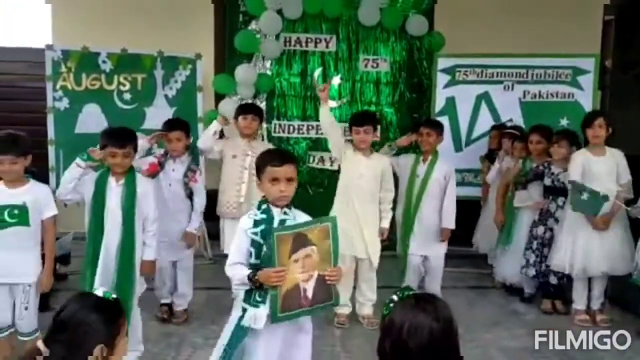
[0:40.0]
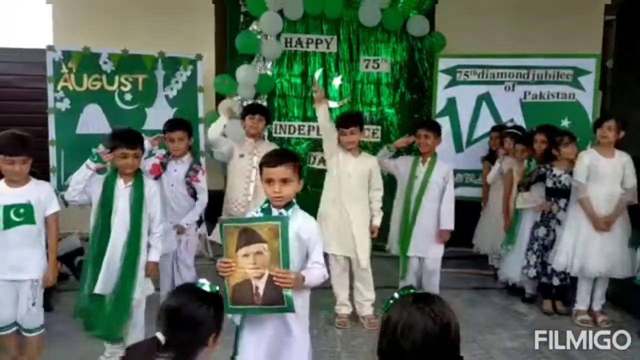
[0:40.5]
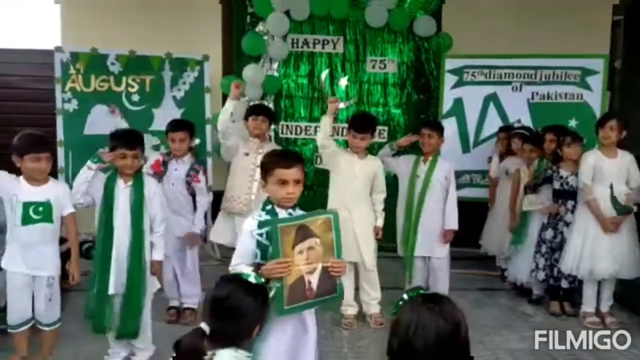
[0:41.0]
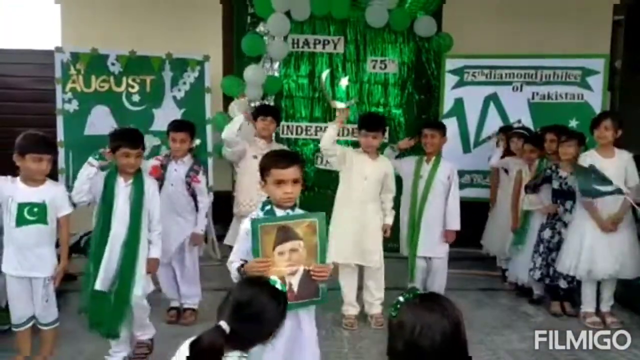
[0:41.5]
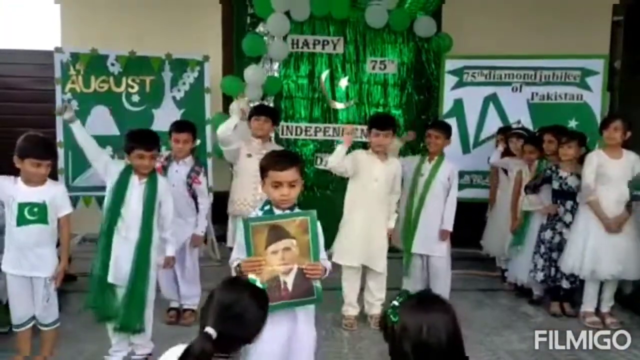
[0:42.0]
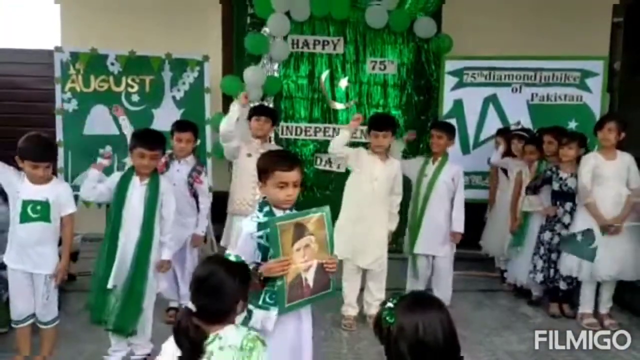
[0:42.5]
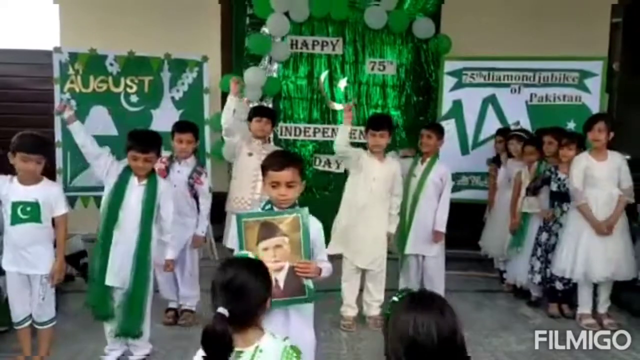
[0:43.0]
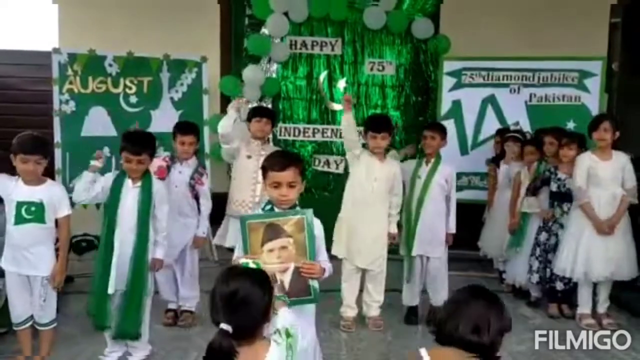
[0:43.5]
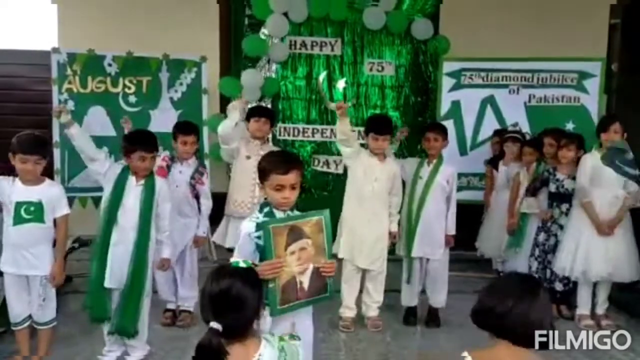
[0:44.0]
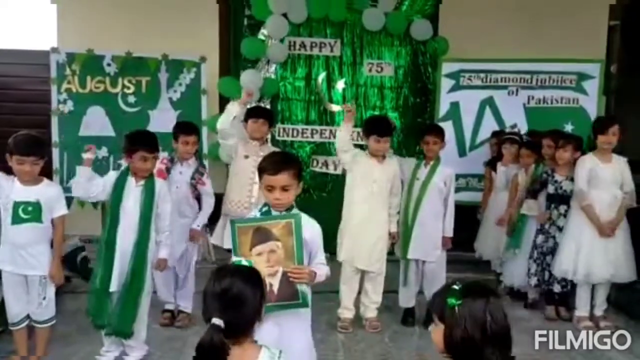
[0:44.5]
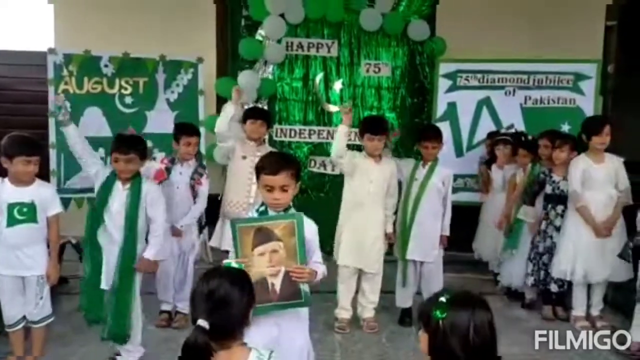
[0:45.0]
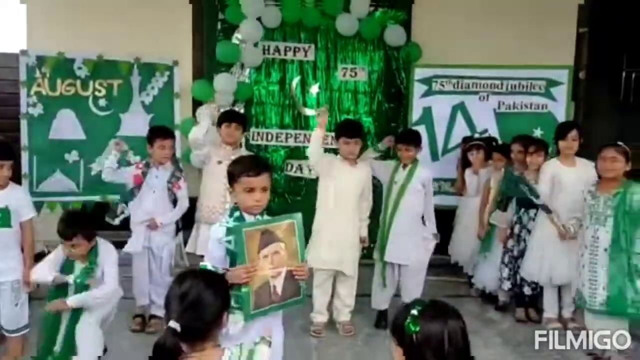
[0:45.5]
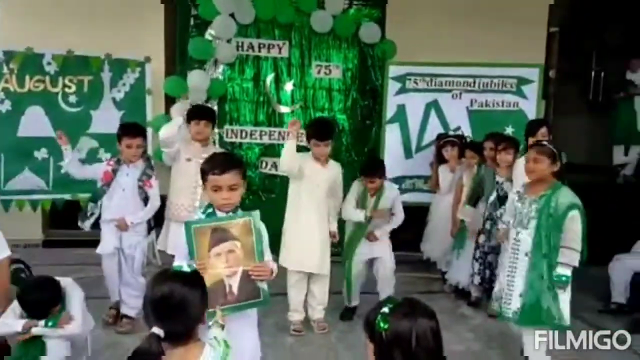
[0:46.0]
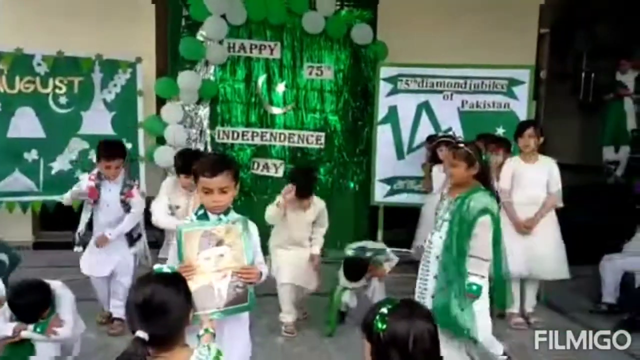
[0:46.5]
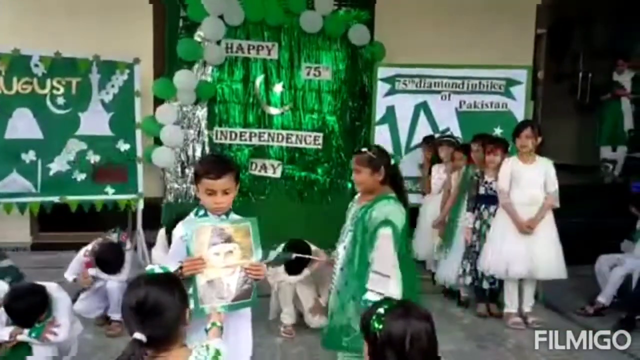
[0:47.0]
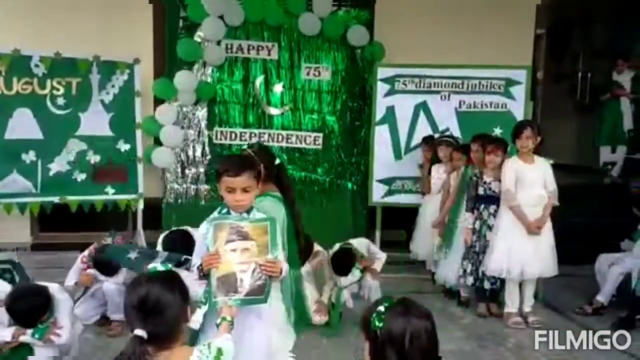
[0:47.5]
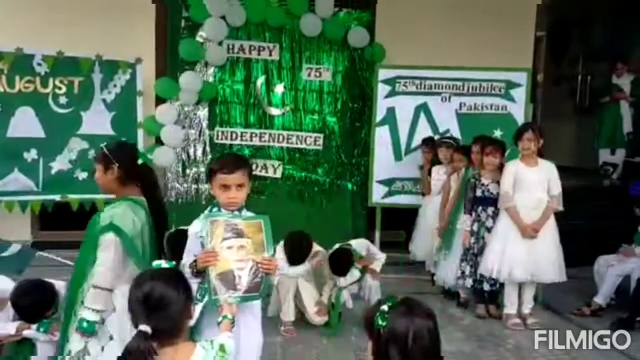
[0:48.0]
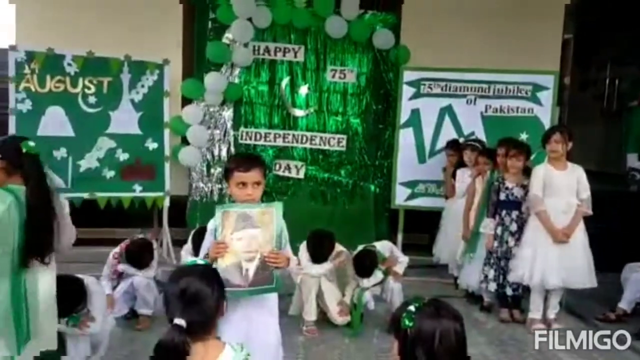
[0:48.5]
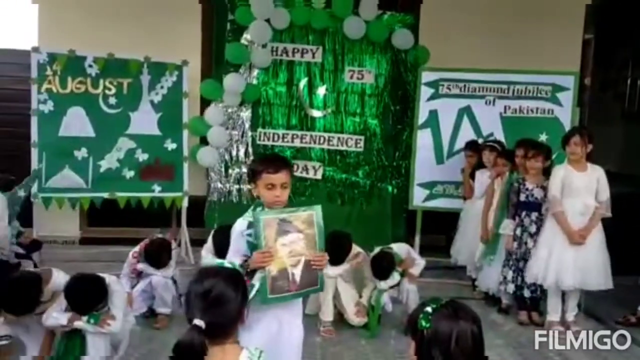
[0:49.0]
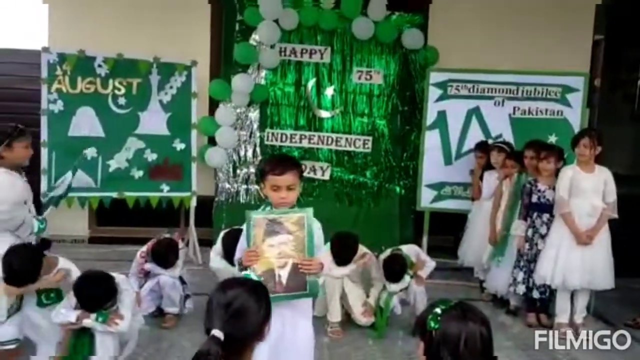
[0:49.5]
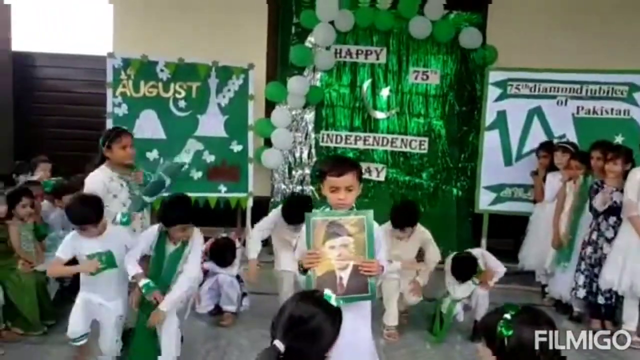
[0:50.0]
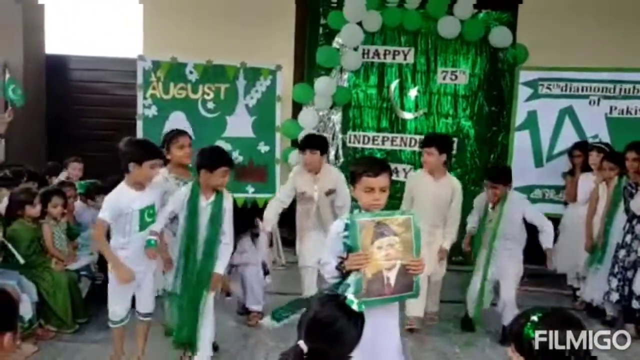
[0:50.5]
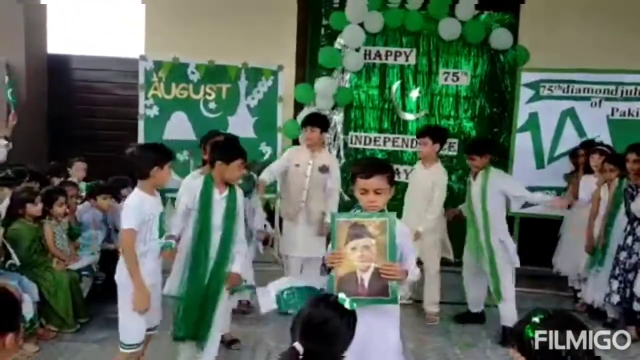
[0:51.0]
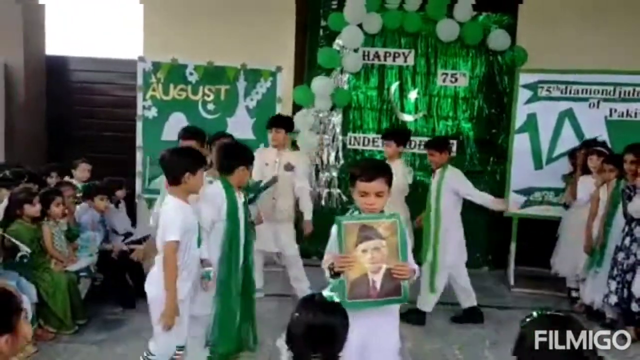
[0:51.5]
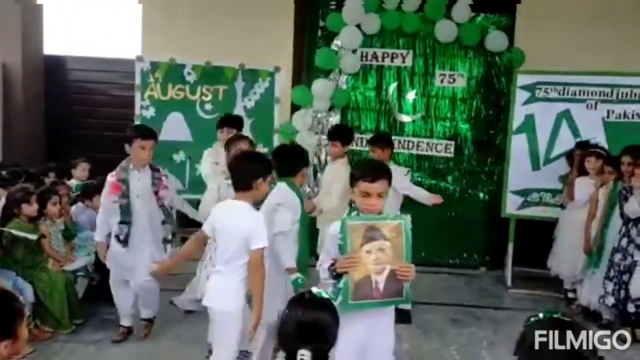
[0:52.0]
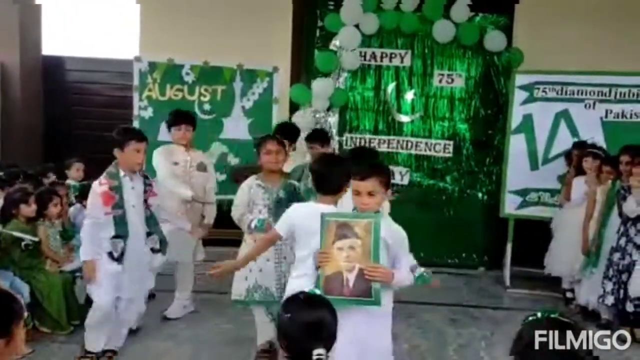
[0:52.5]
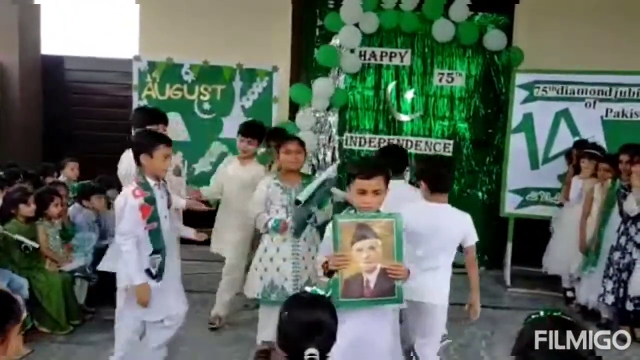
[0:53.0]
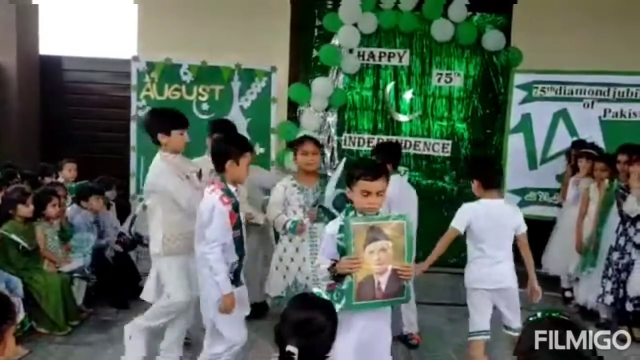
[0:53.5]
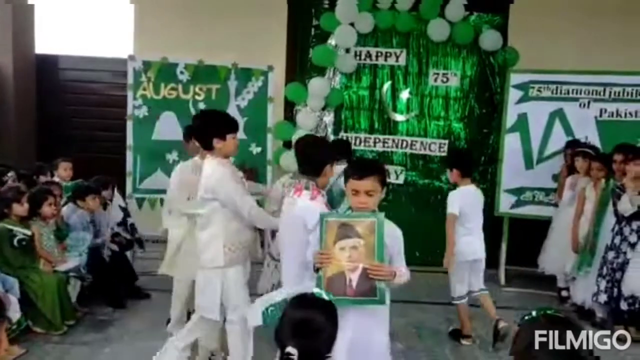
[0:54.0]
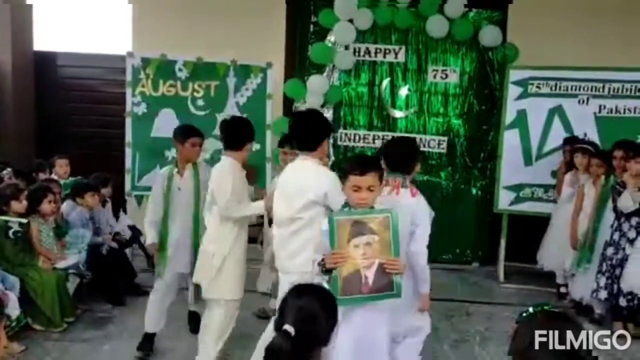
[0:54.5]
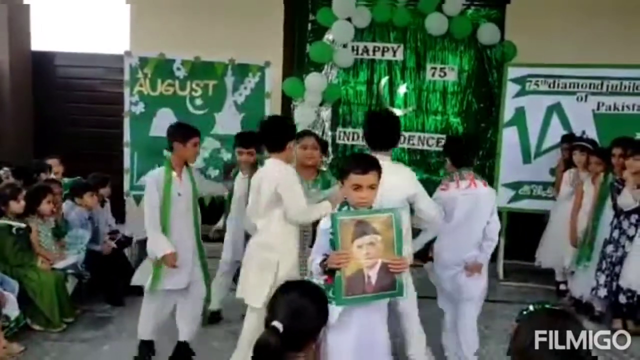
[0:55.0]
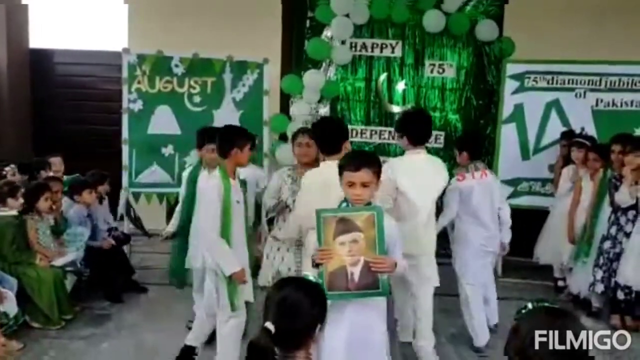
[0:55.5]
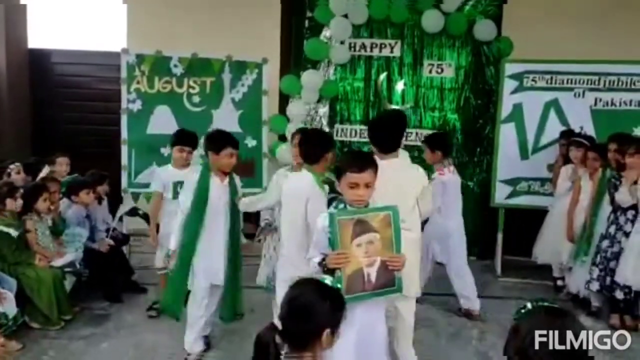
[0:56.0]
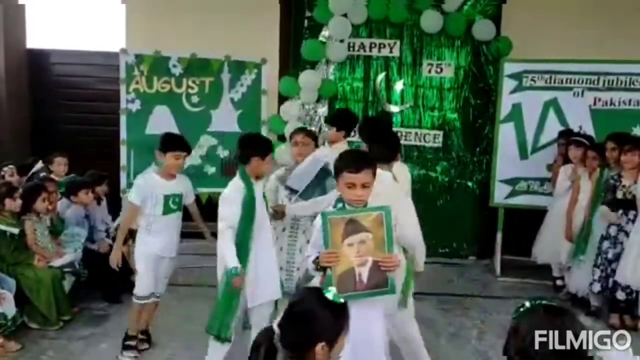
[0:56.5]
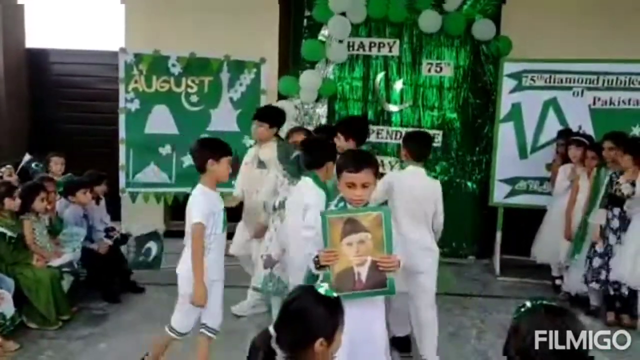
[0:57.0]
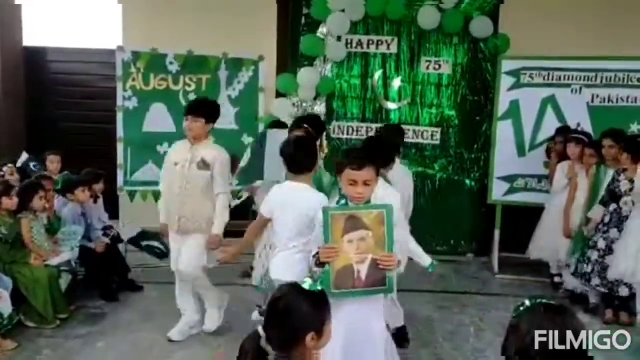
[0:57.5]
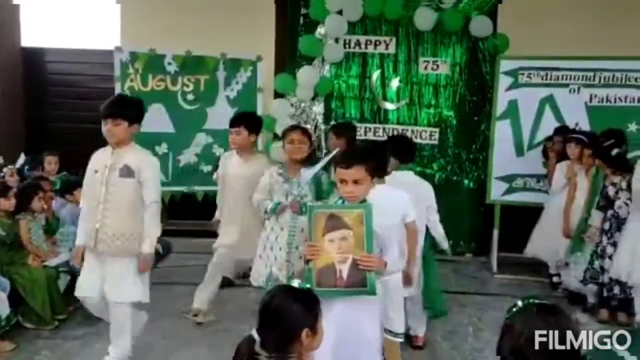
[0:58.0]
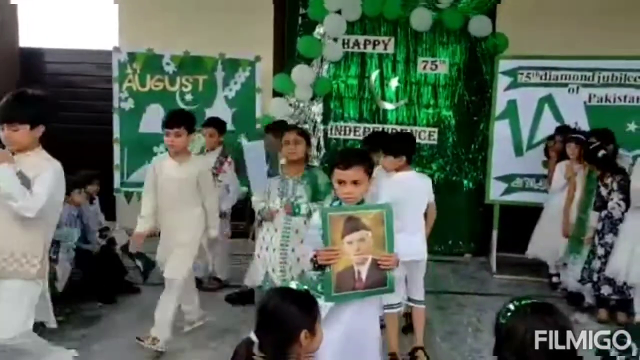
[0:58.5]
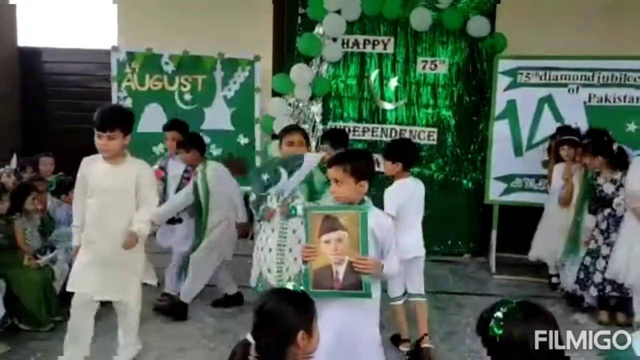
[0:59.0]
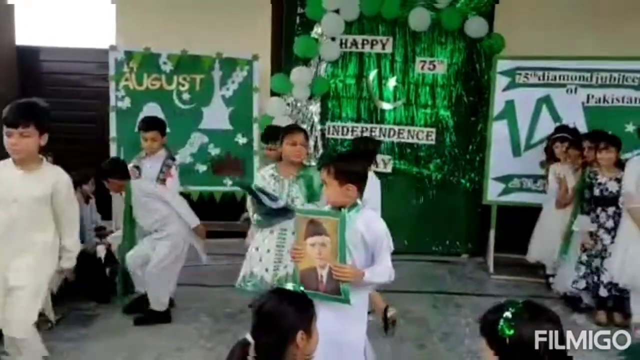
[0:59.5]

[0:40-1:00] The boys from the row of boys pump their fists and then kneel down, apart from the boy holding up the picture of the person. The girl from the beginning comes back, still waving the Pakistani flag, and the boys circle around her. She appears to wear a green and off-white dress with a green pattern on it. The wall in the background looks beige. The scene seems to take place outside on some sort of pavilion or something similar, with a lot of natural sunlight apparently coming in. The row of girls on the right-hand side still has not moved from its position. The kids show a wide variety of facial expressions; the boy moving the picture around does not seem to smile like some of the other kids.